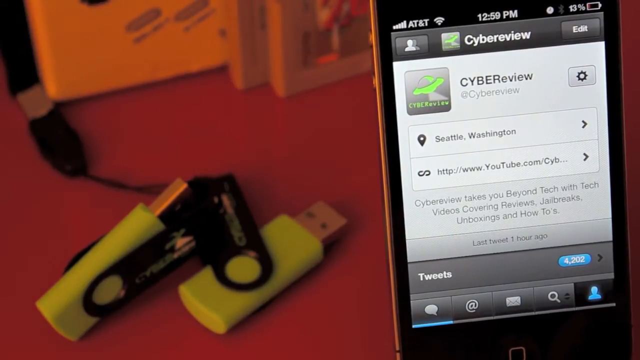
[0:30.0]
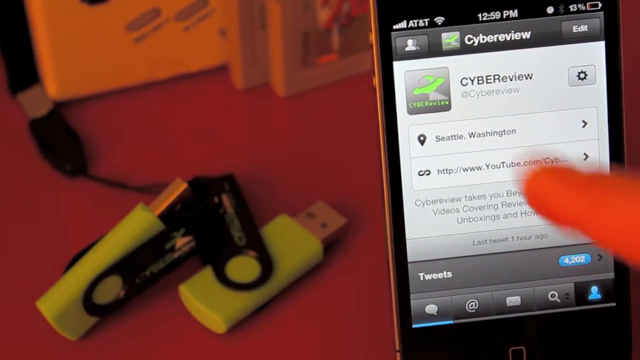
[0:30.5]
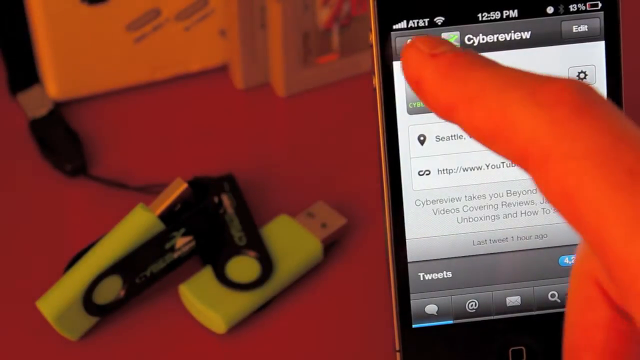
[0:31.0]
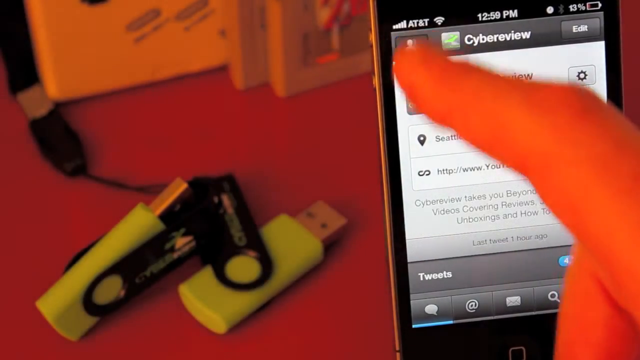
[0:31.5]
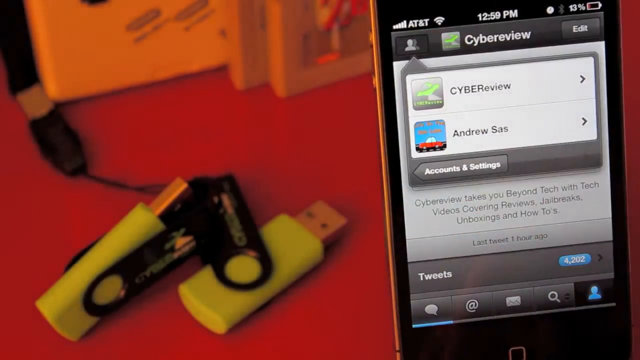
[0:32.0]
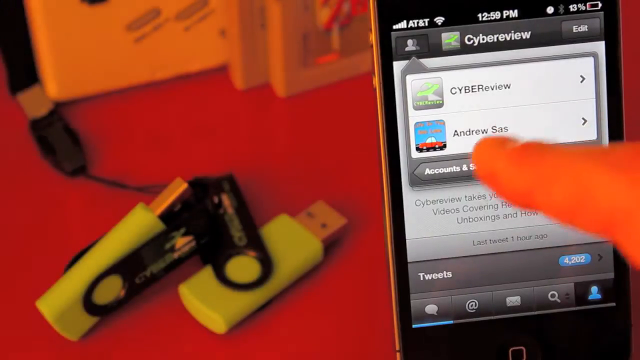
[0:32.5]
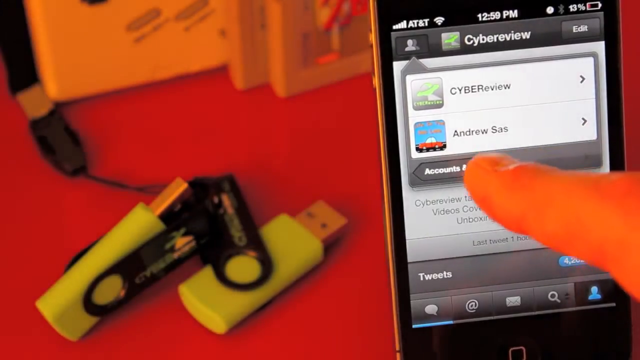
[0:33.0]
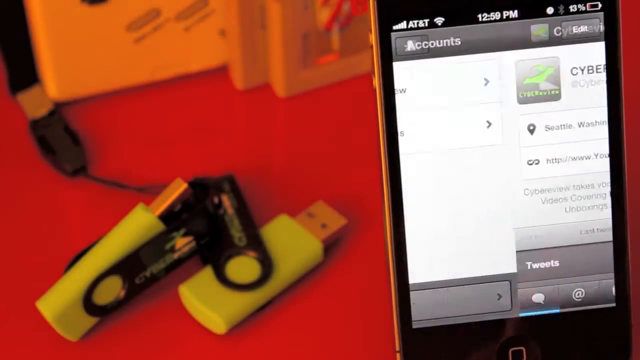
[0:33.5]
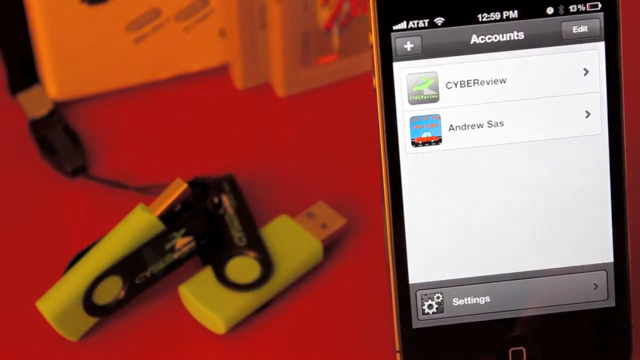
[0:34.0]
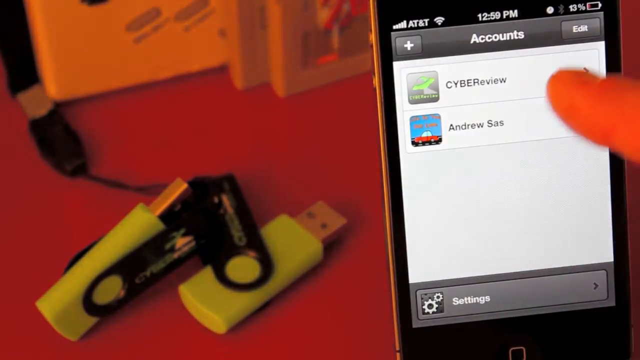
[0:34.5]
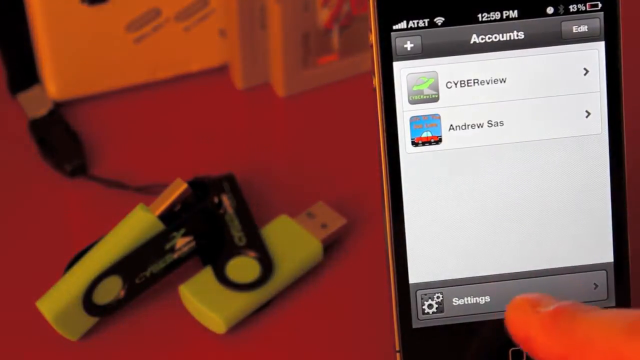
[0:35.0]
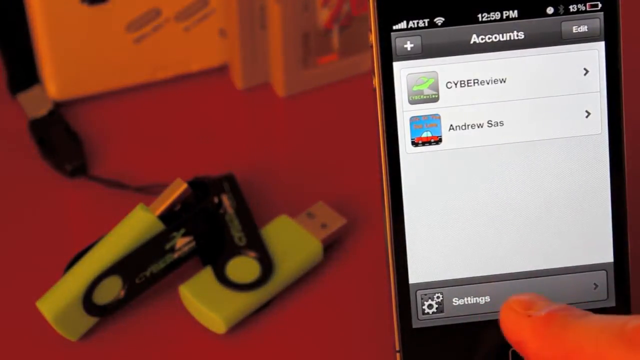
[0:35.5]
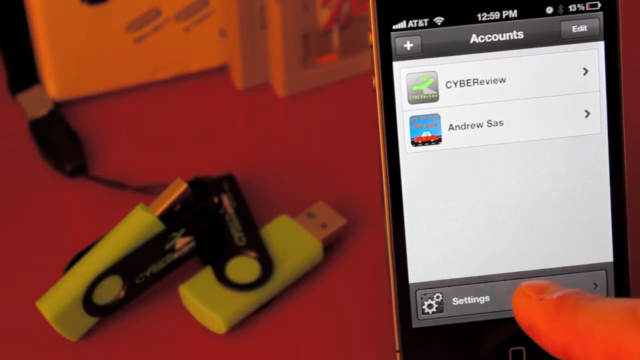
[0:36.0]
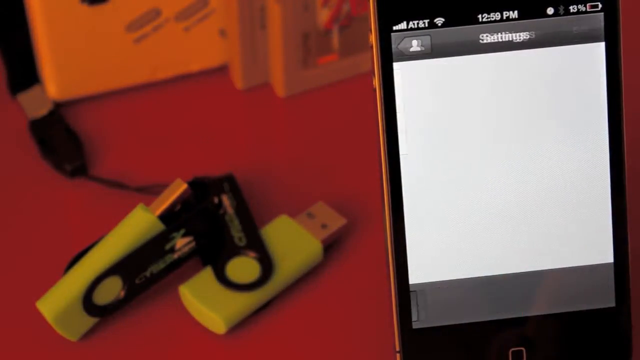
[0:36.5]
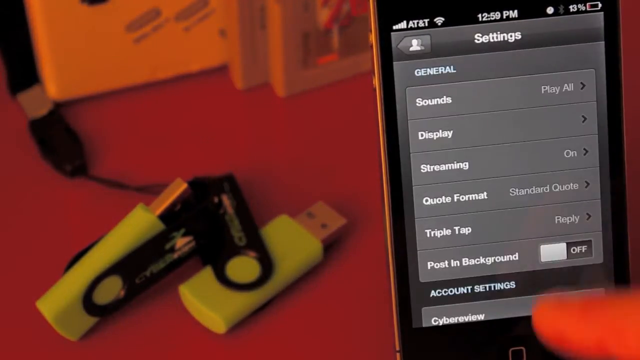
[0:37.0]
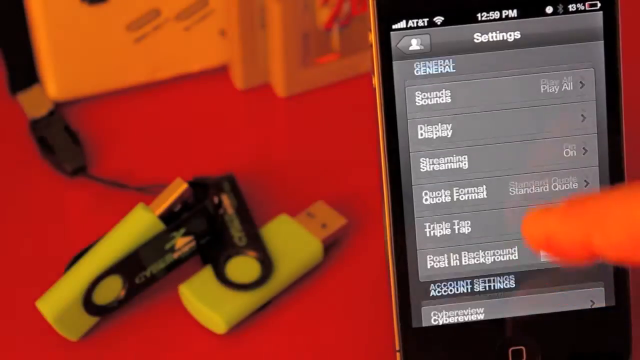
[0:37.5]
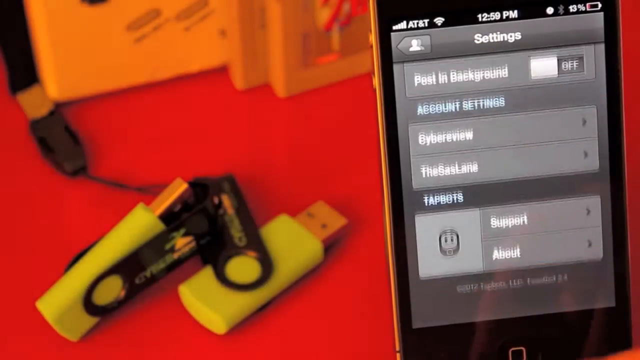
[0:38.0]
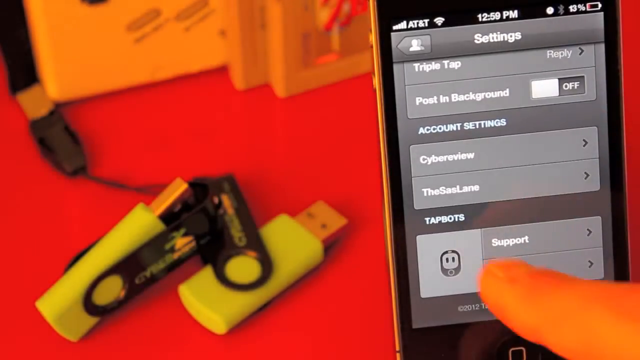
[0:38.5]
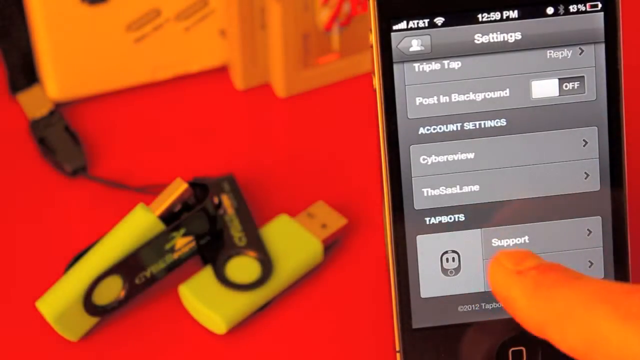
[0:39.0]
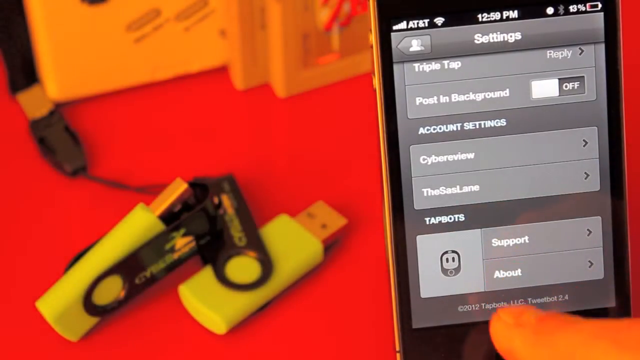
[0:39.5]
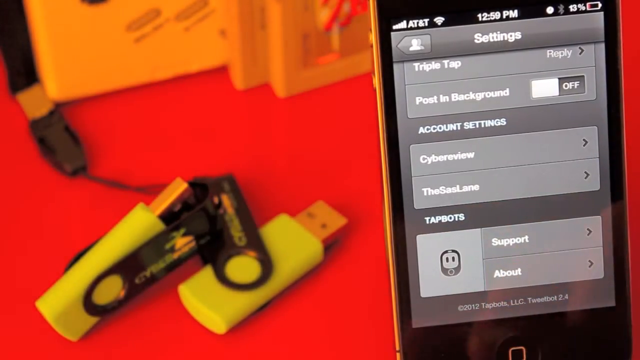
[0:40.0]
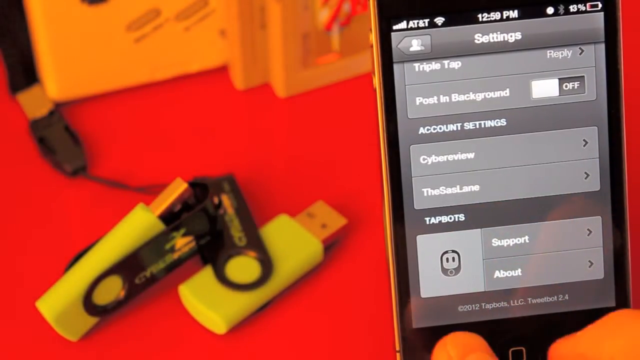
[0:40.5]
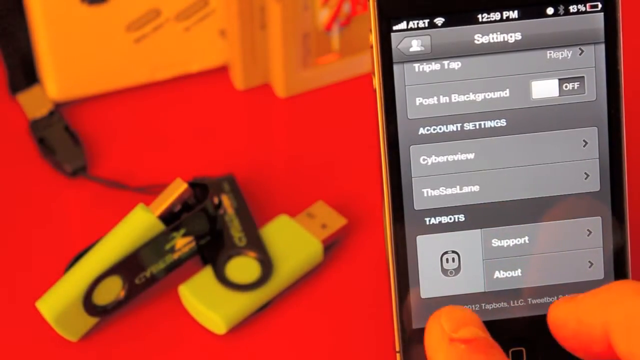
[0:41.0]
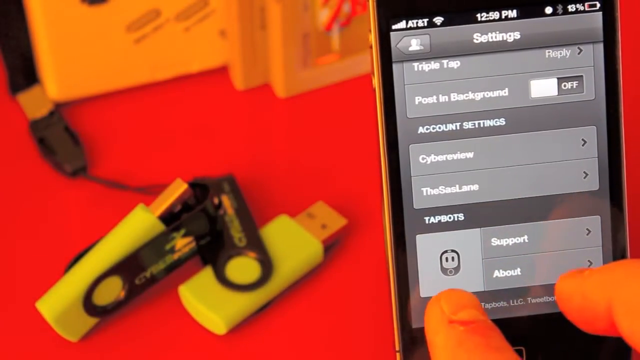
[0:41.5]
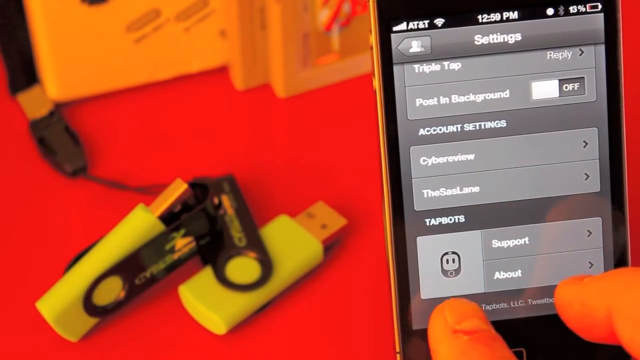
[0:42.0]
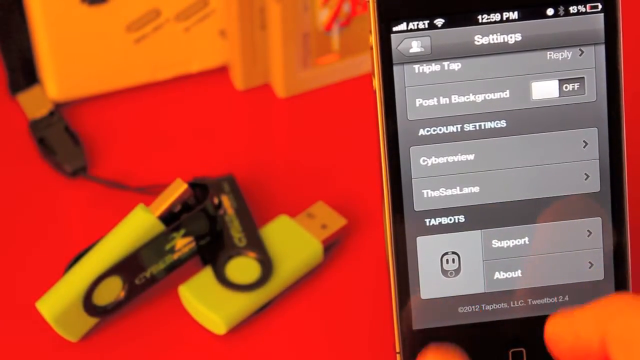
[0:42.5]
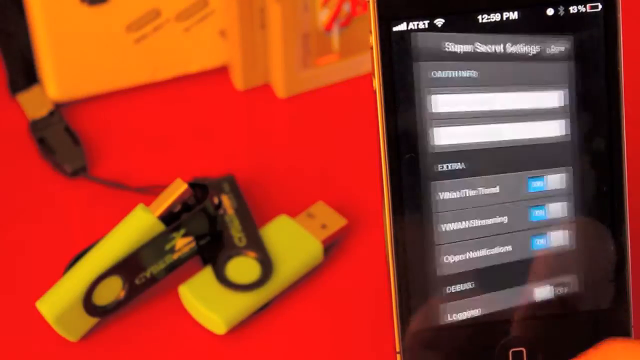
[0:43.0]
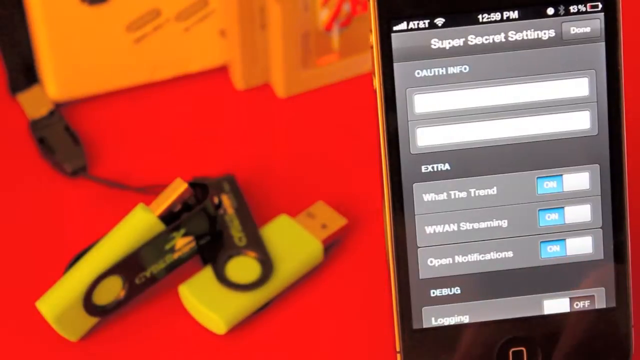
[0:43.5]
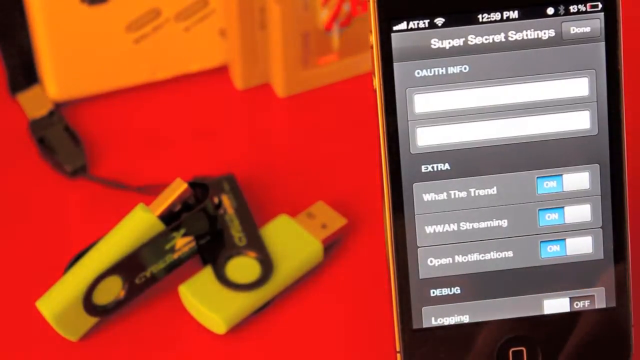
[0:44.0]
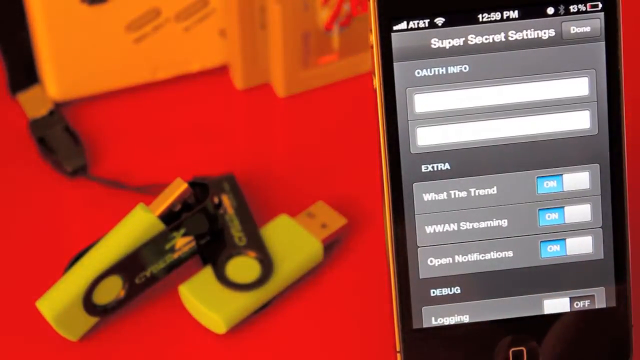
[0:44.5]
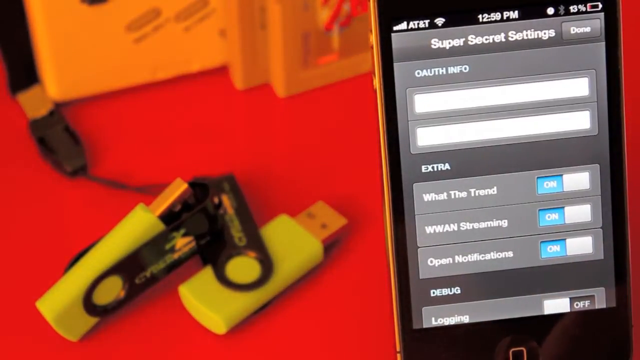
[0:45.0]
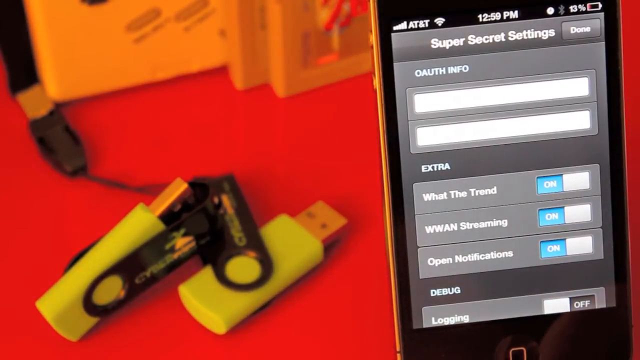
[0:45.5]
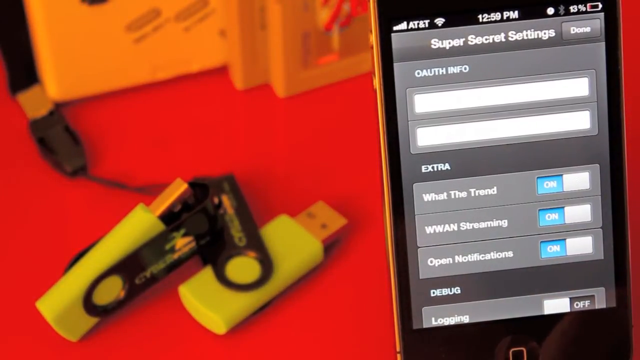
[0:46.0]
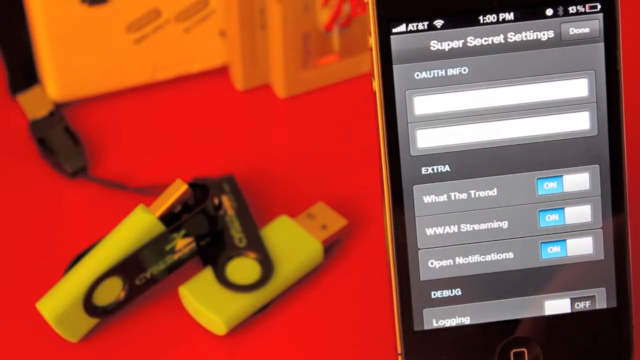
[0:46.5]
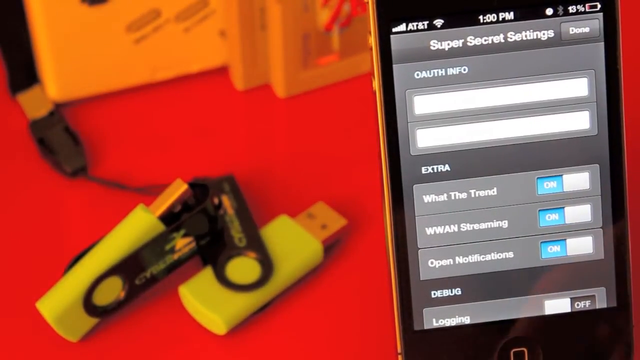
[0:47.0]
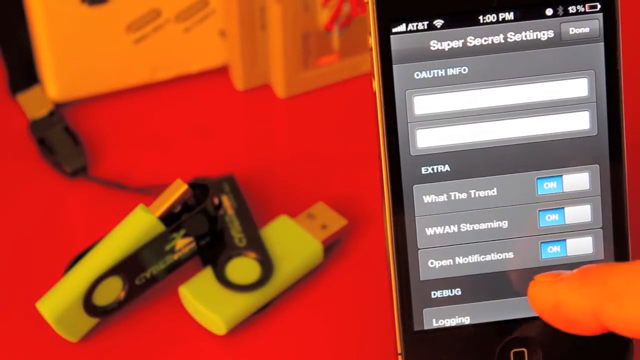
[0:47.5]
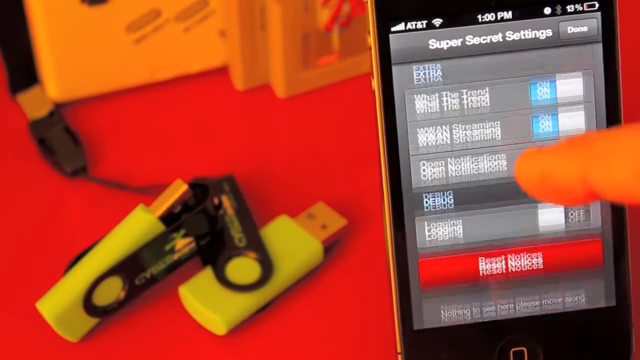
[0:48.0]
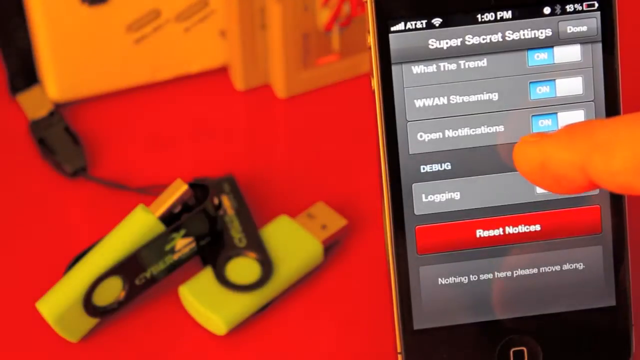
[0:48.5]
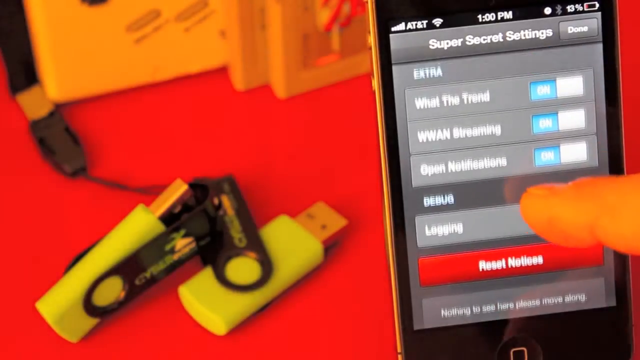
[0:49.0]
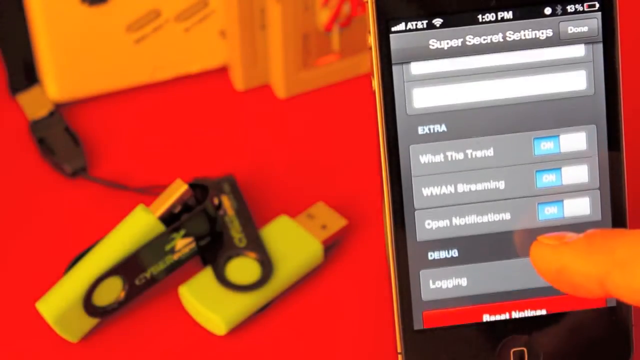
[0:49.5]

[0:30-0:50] The view returns to the phone, with the two yellow thumb drives open on the red tabletop behind it. The video author's finger comes in from the corner and points to where it says "cyber review" and "seattle washington" on the phone. He hits the person button, and it shows "cyber review" and "andrew sass." He scrolls through menus showing account settings, "cyber review" and "andrew sass" again, and taps on an about option a few times. At the bottom, "super secret settings" comes up, apparently a hidden settings option; he clicks the spot, seemingly three times. Other options including "what's the trend" appear.